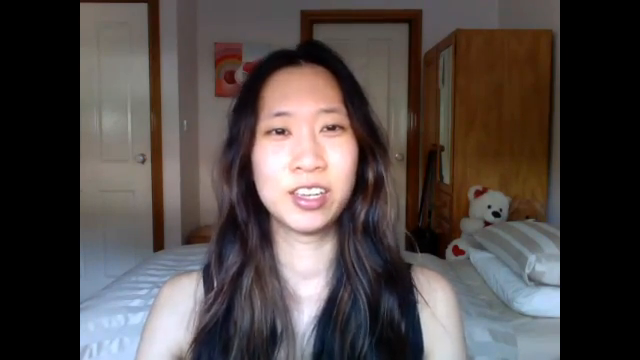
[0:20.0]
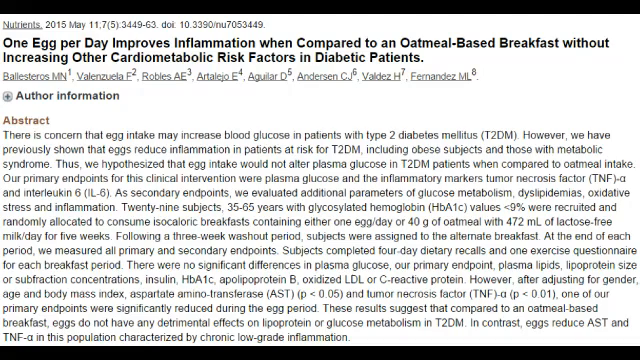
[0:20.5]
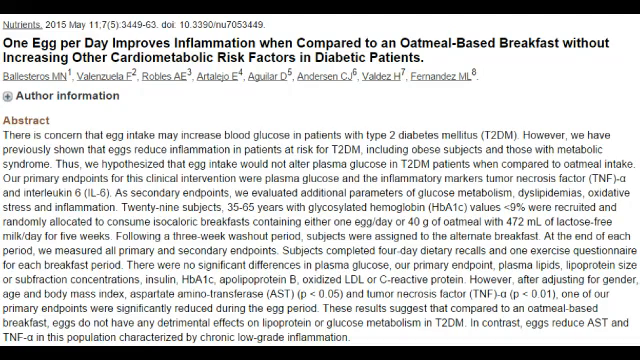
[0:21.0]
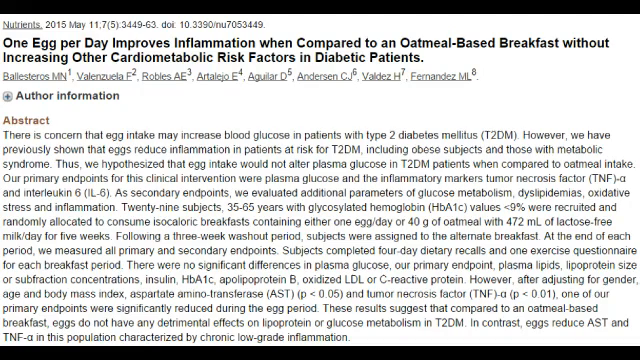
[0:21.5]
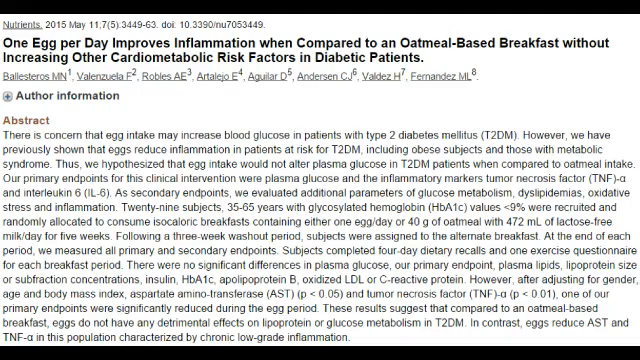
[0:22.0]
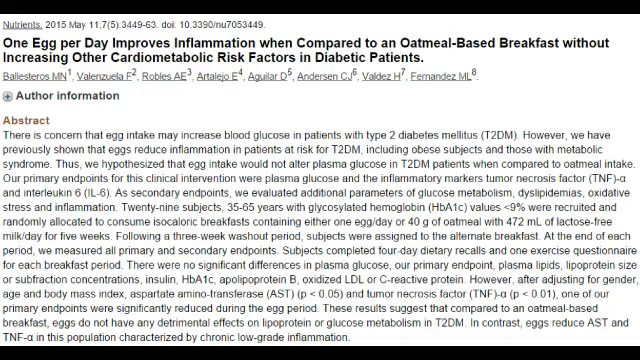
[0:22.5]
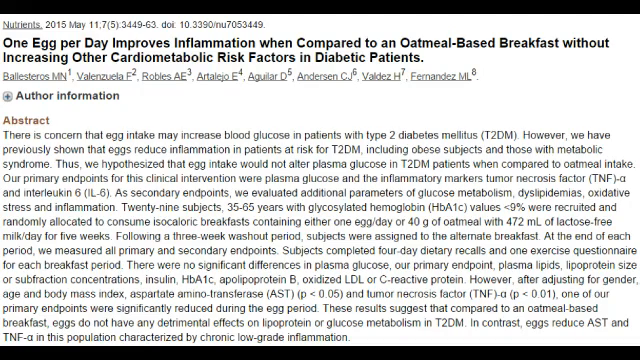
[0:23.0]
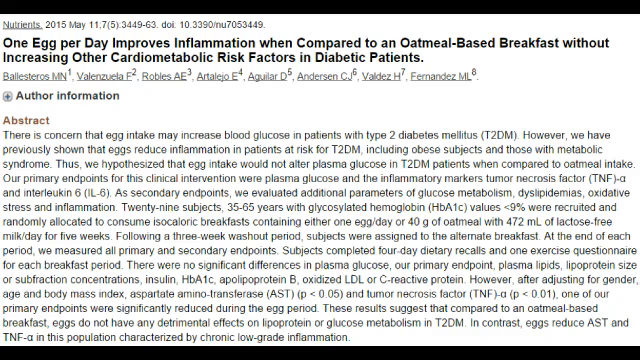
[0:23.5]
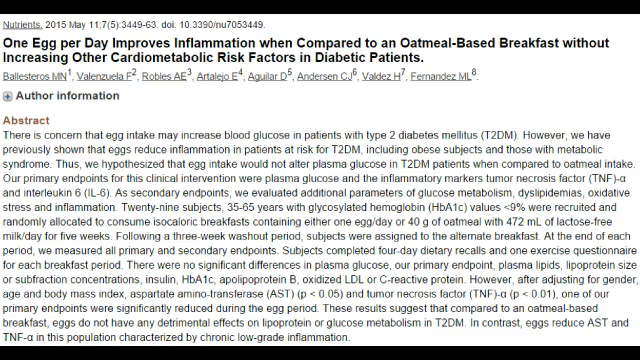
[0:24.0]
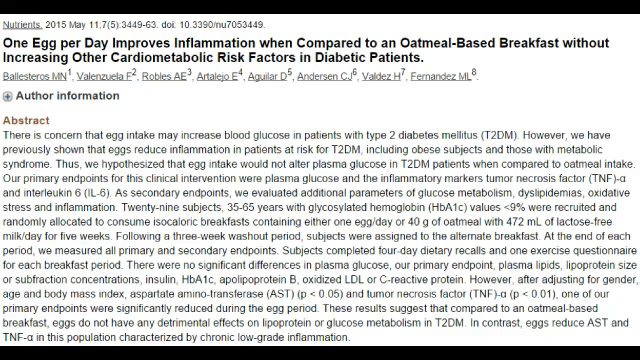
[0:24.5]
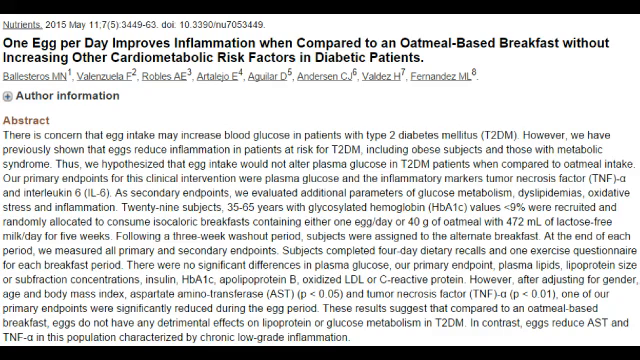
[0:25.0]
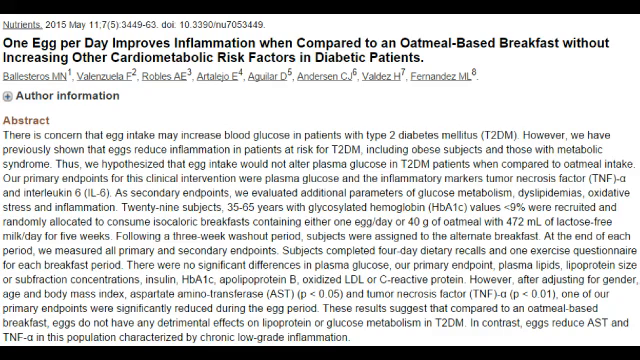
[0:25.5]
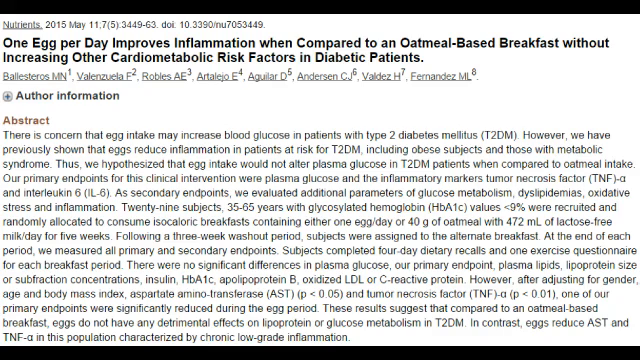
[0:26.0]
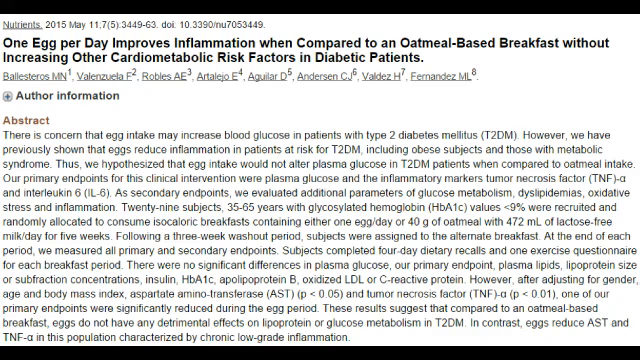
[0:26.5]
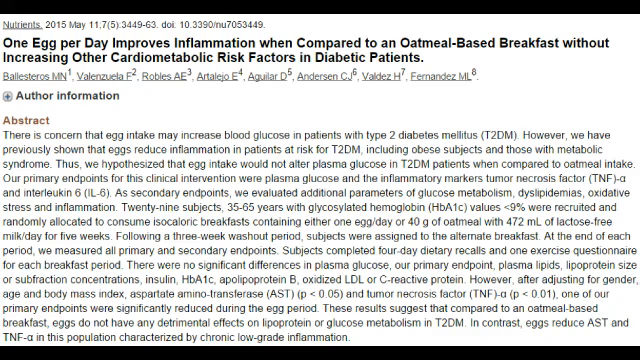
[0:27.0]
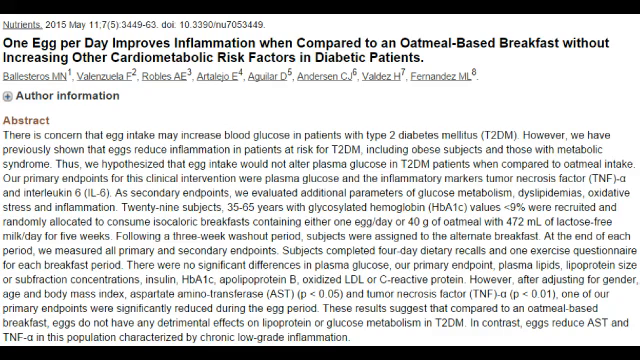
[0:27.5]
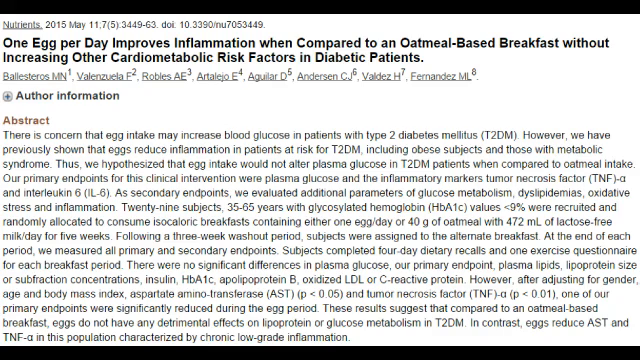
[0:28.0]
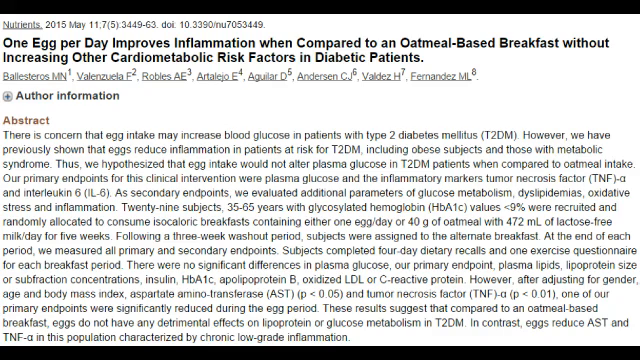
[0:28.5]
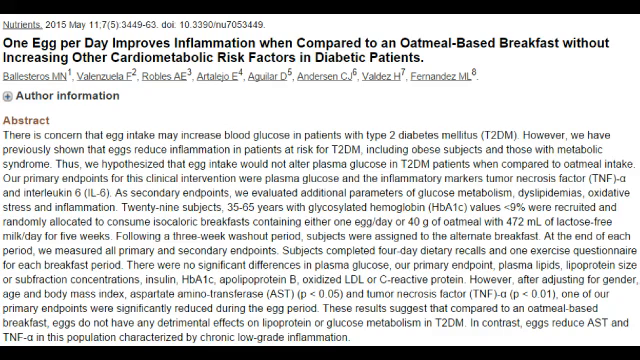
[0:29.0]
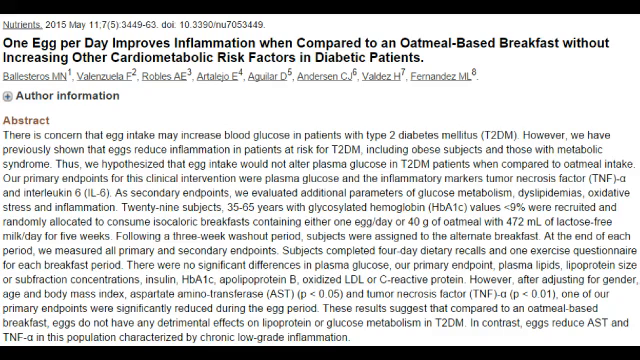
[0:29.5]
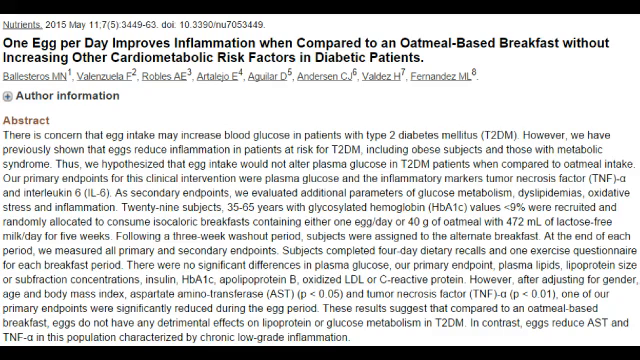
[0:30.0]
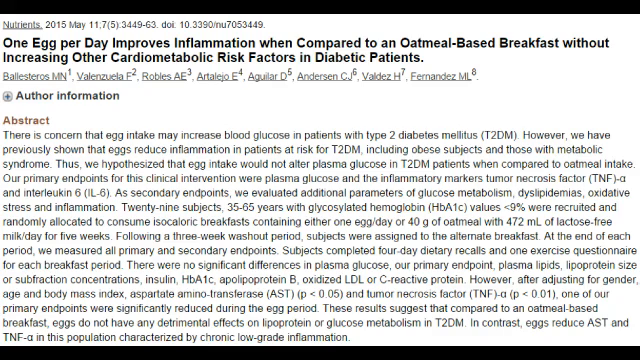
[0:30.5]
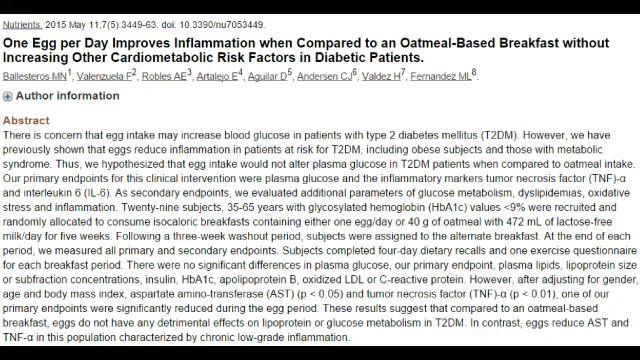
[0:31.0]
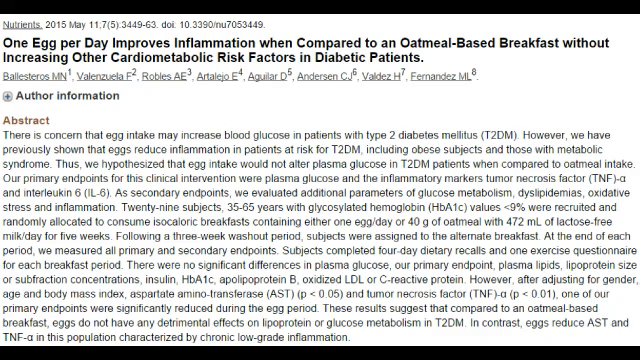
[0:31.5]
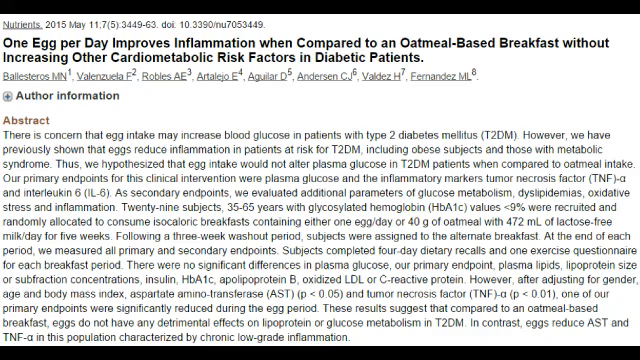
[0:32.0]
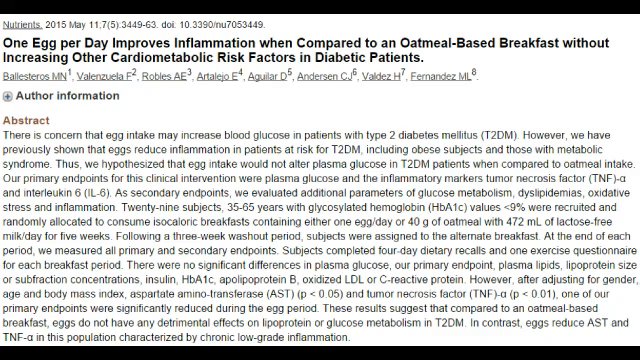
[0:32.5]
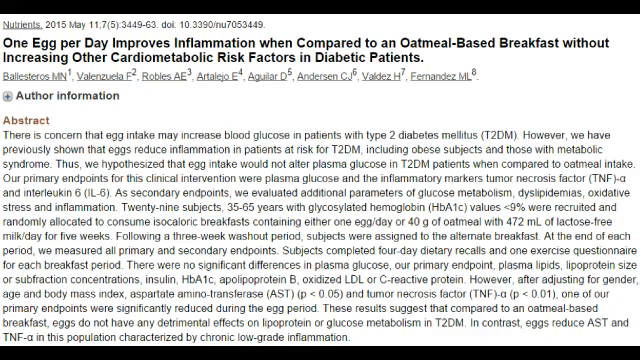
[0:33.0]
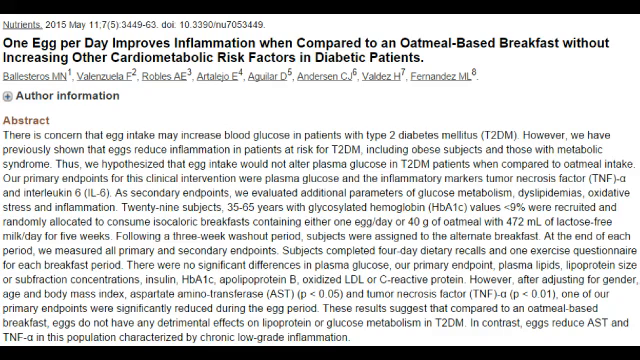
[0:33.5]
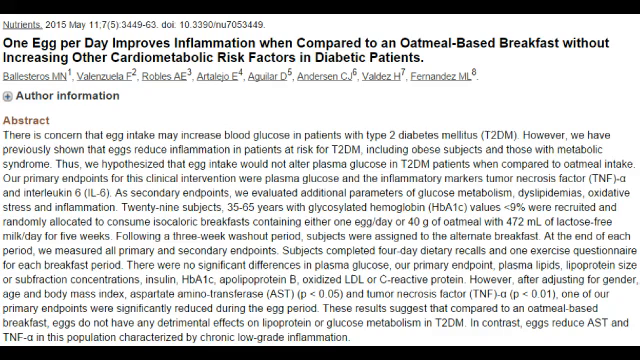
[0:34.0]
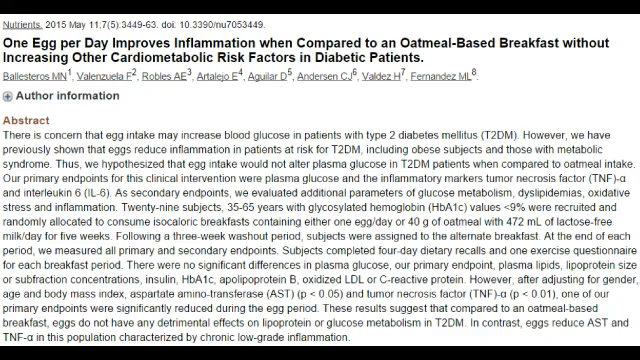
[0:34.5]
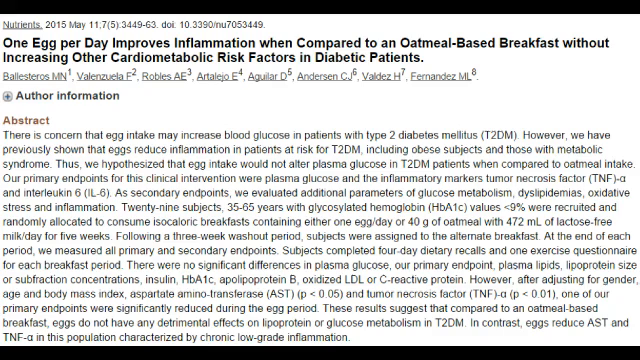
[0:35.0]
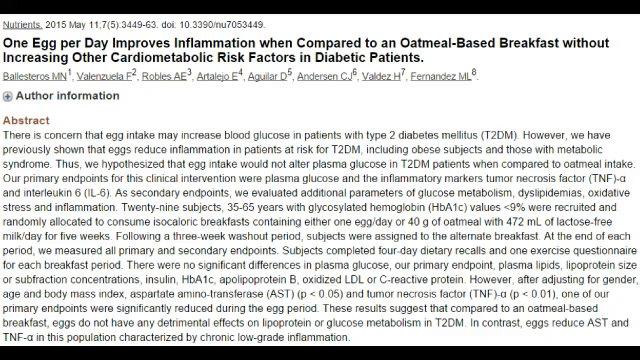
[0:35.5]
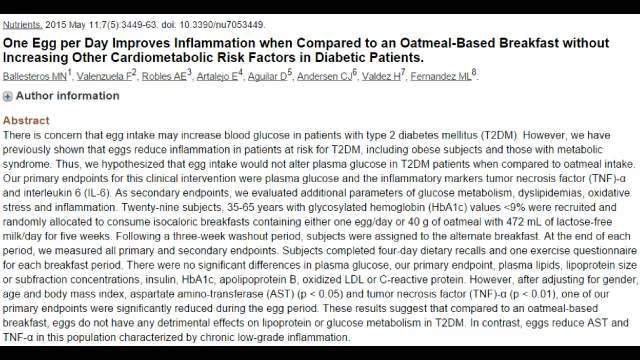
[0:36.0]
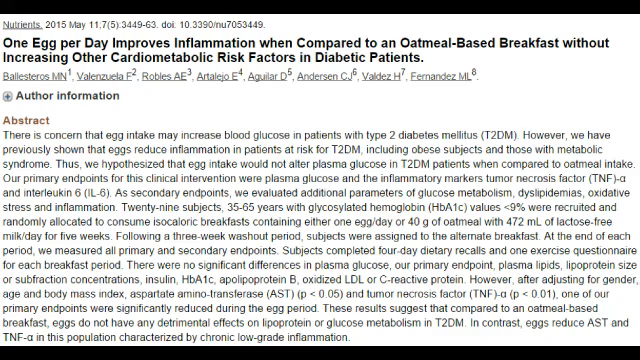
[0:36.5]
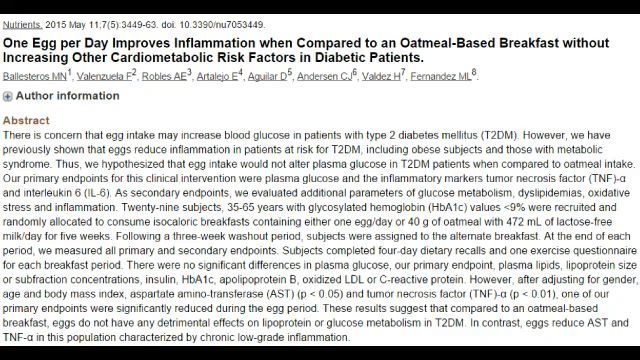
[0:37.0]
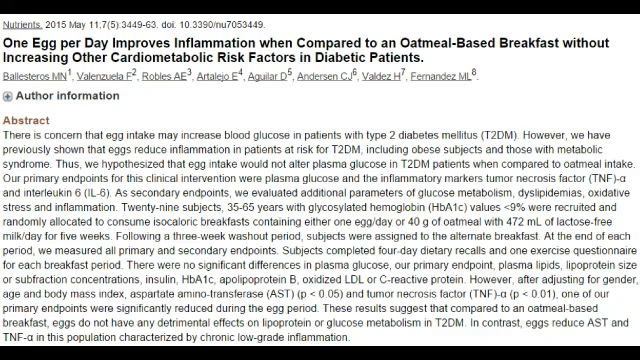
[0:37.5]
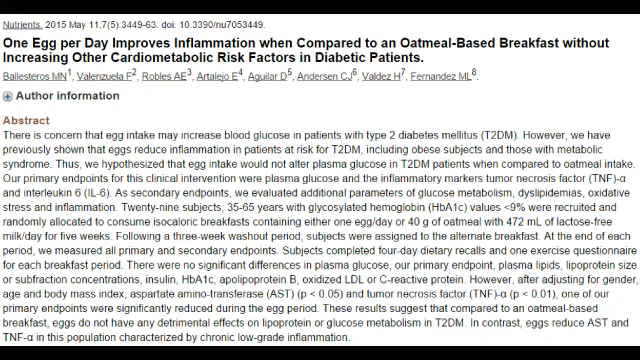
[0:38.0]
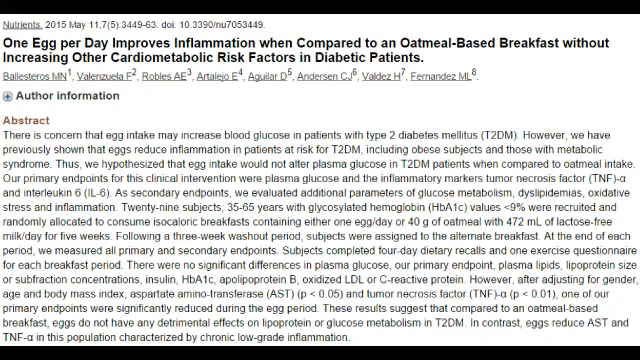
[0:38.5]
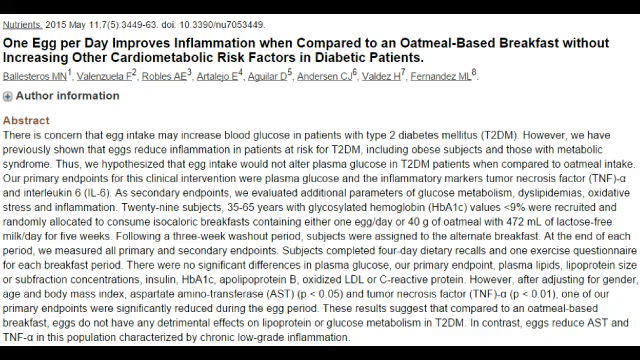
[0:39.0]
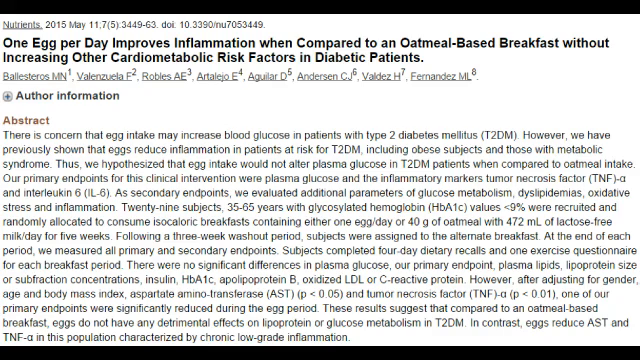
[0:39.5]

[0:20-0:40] The woman is presenting a scientific article titled "one egg per day improves inflammation when compared to an oatmeal-based breakfast without increasing other cardiometabolic risk factors in diabetic patients." A list of authors is shown, including Valenzuela F., Robles A.E., Aguilar T., Anderson C.J., Valdez H. and Fernandez N.L. The abstract of the article is shown, which cites "concern that egg intake may increase blood glucose".